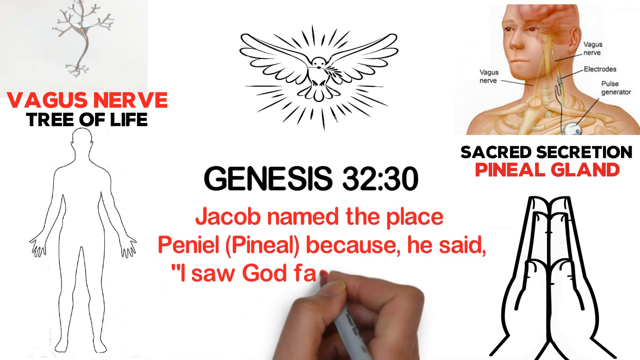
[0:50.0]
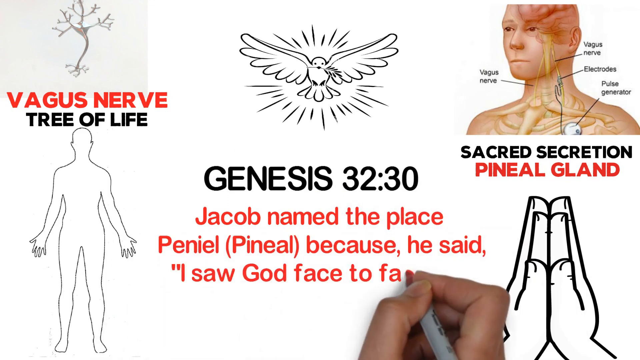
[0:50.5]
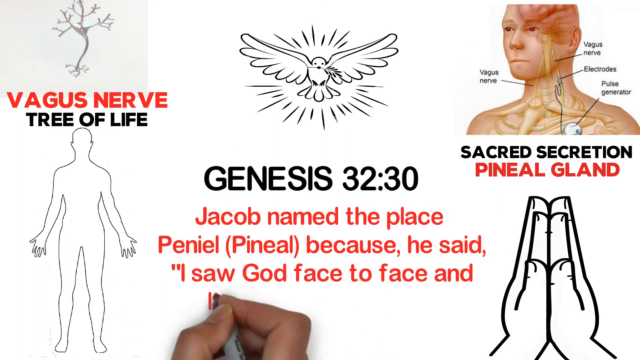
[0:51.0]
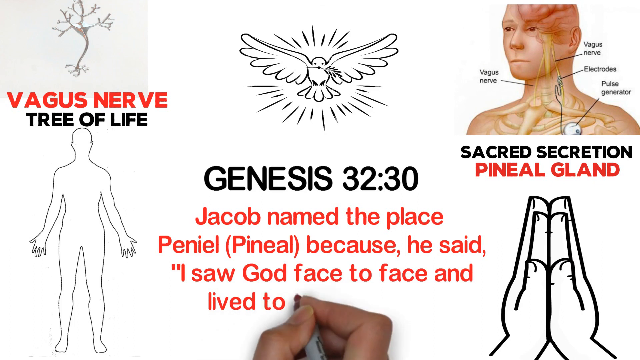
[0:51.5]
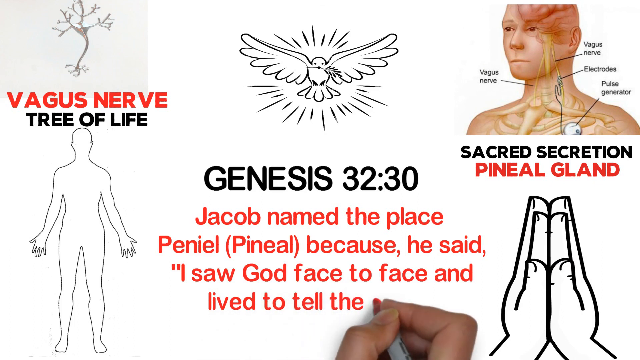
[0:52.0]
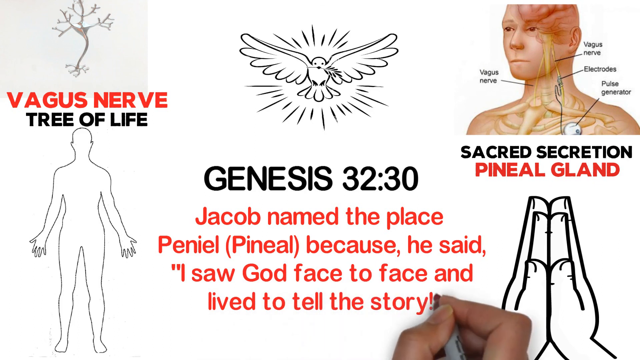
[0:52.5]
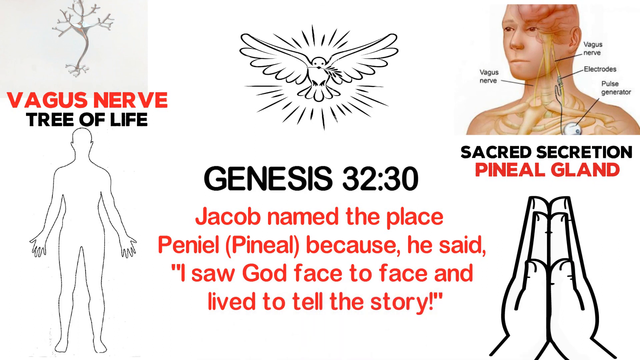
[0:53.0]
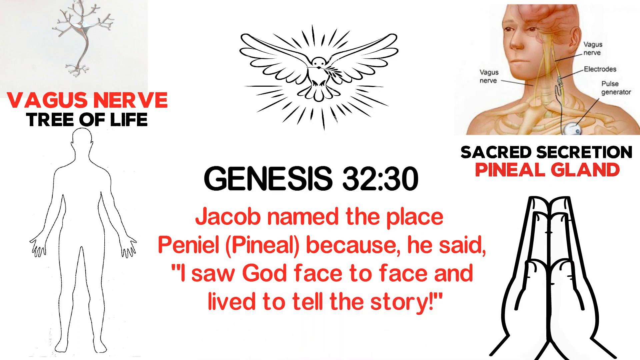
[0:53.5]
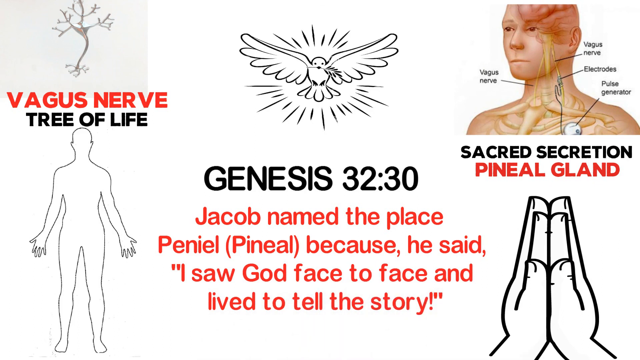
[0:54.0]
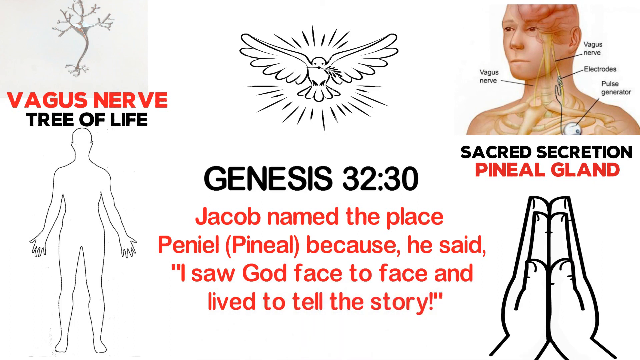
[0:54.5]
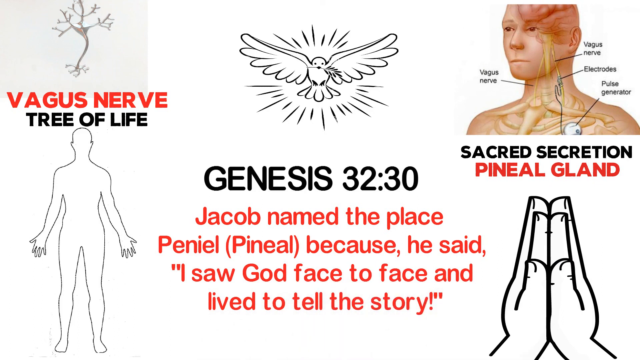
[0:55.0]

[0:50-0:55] The red text below the Genesis 32:30 scripture continues, and the full text reads "Jacob named the place Peniel, because he said, I saw God face to face and lived to tell the story." After the four lines of red text are written, the video ends, with the whole screen filled with images and a few lines of text, some in black and some in red.